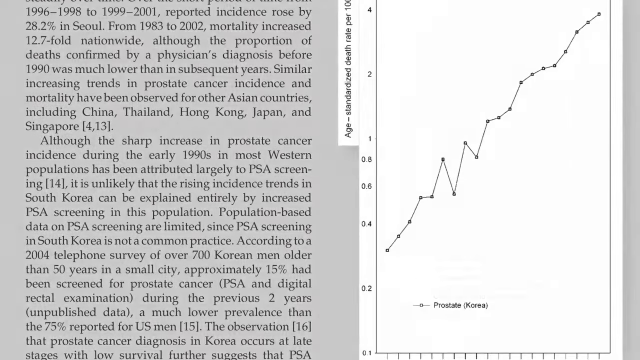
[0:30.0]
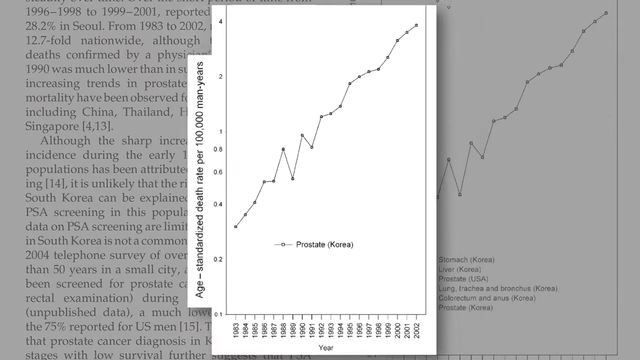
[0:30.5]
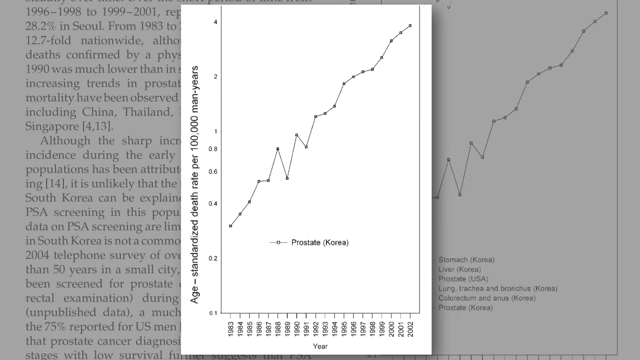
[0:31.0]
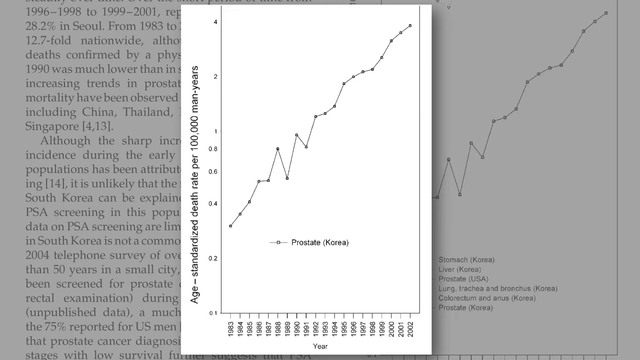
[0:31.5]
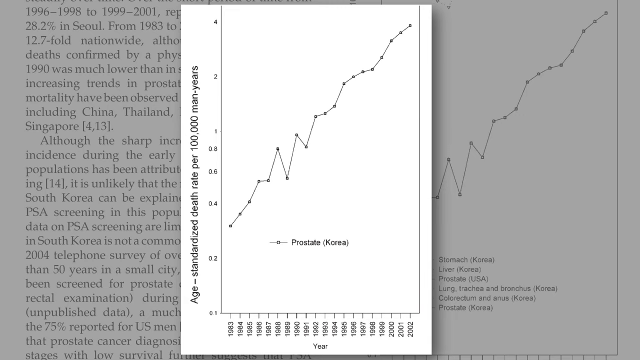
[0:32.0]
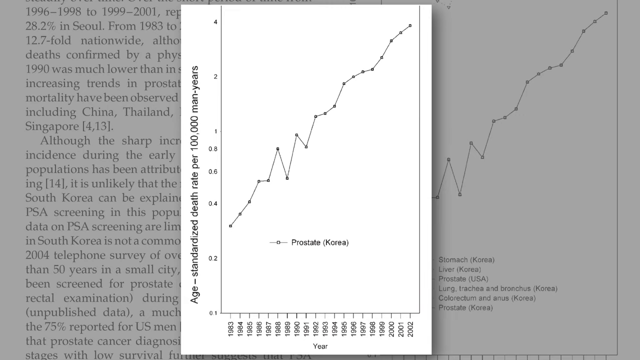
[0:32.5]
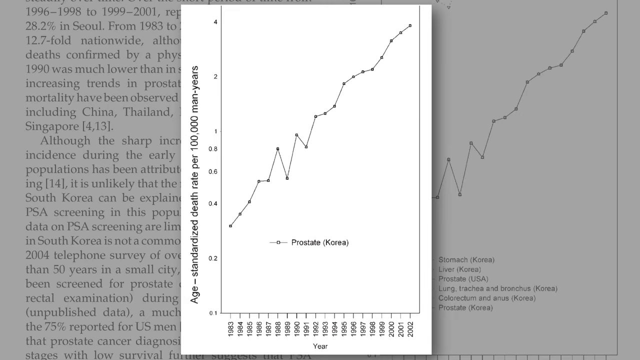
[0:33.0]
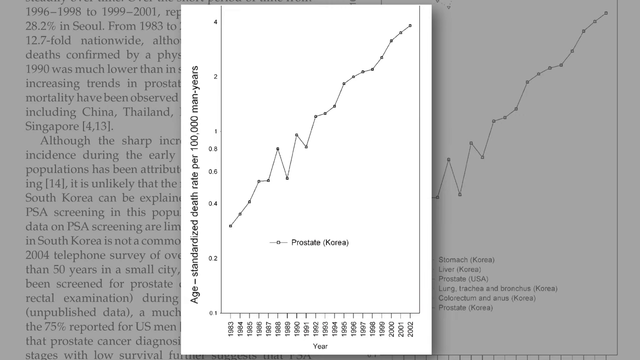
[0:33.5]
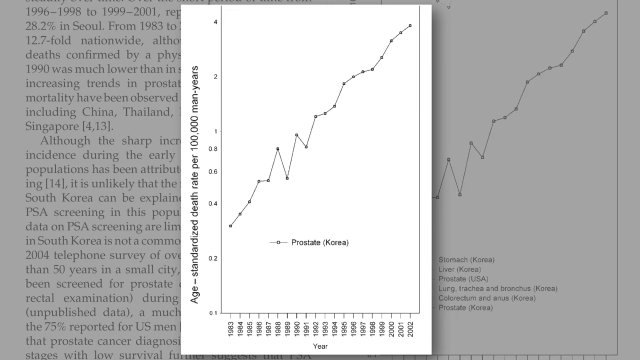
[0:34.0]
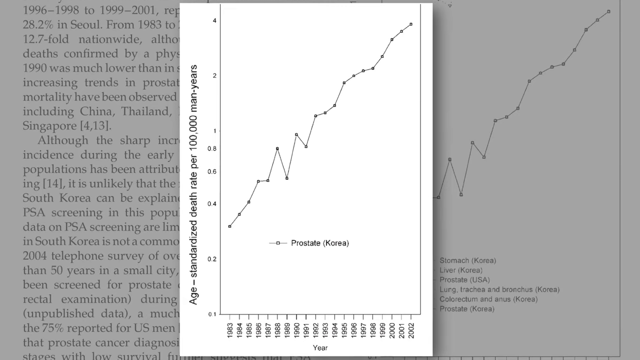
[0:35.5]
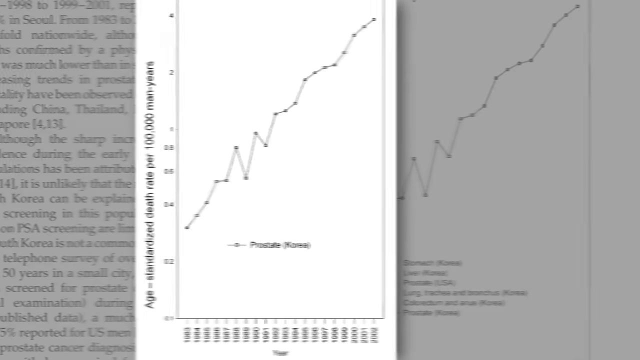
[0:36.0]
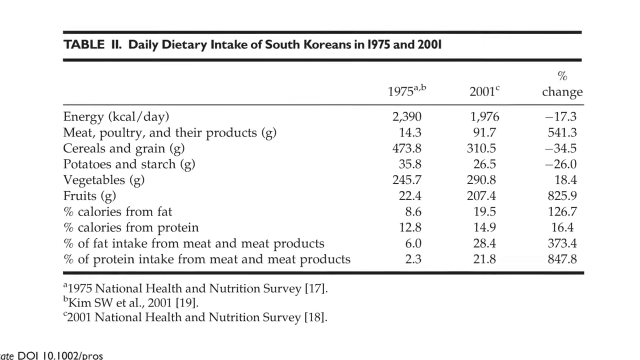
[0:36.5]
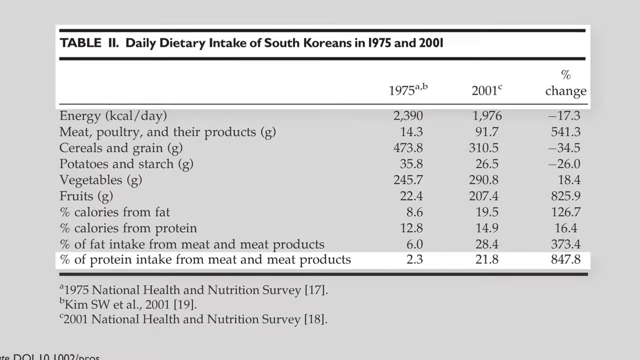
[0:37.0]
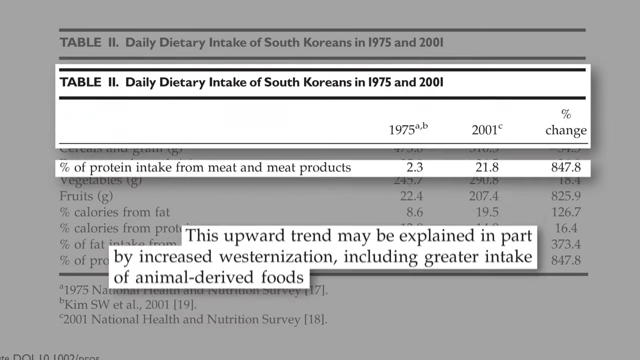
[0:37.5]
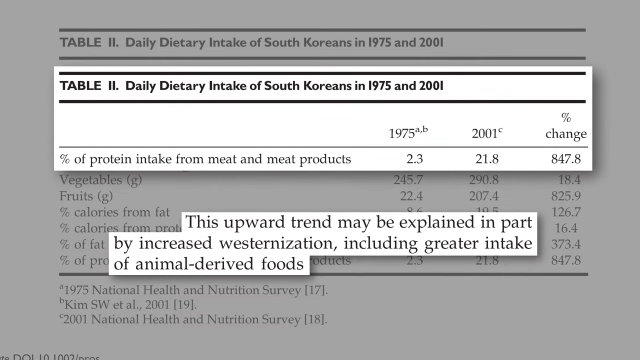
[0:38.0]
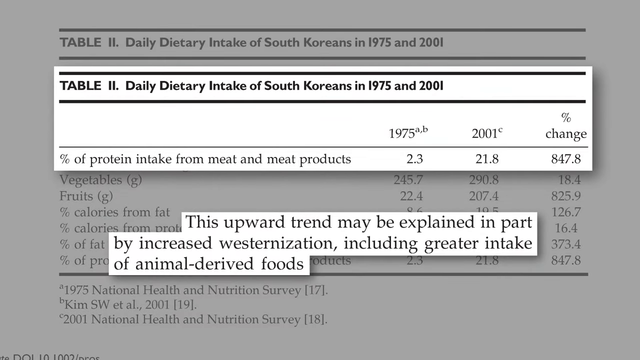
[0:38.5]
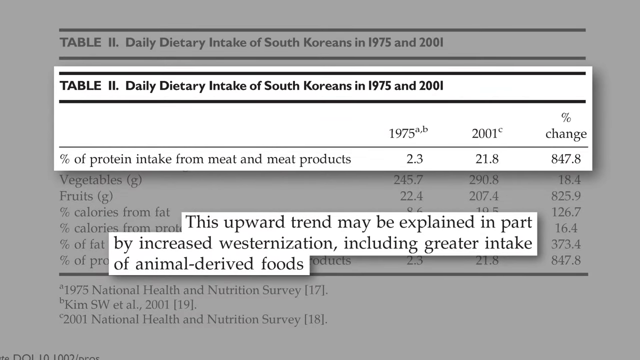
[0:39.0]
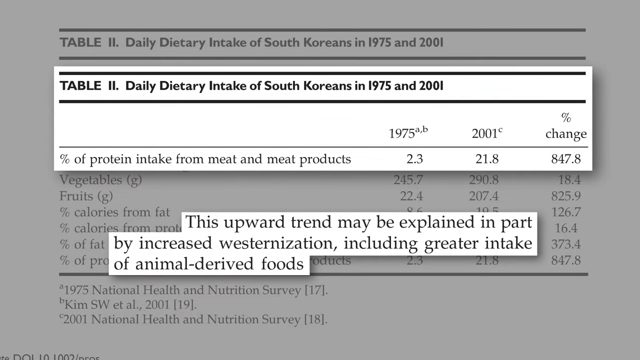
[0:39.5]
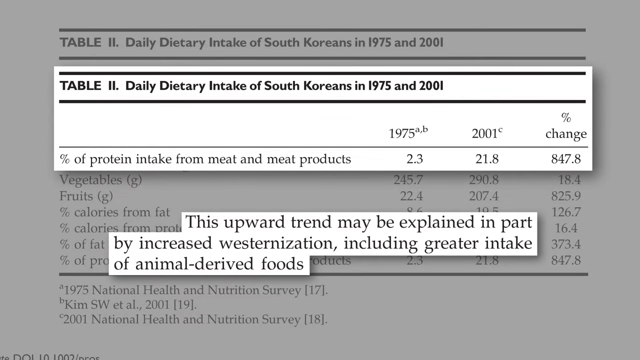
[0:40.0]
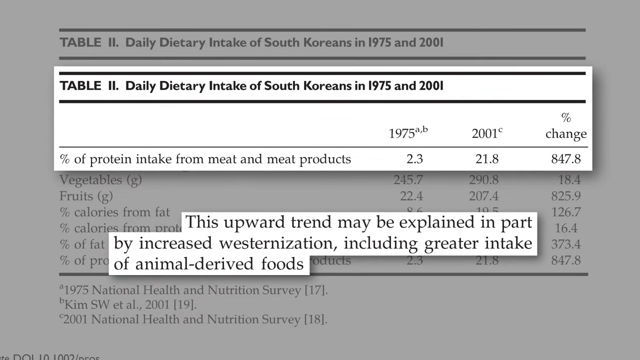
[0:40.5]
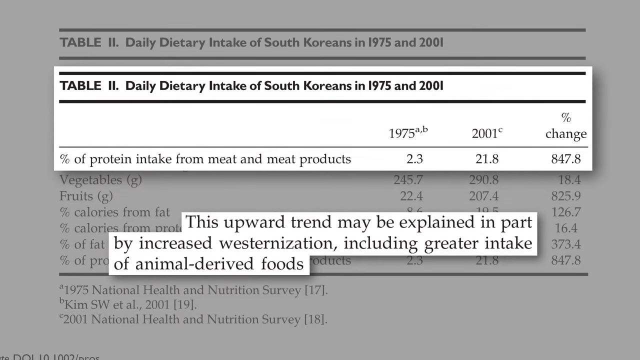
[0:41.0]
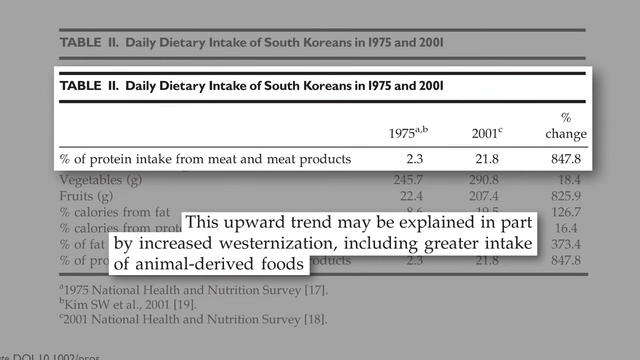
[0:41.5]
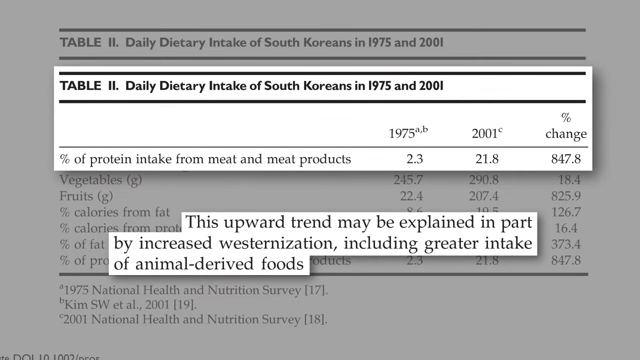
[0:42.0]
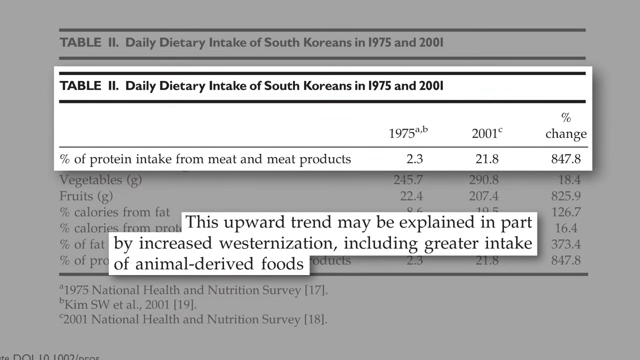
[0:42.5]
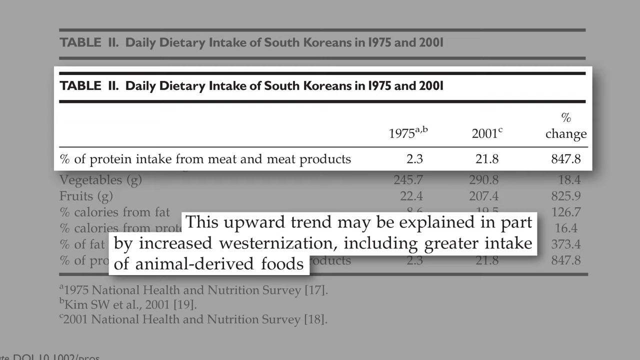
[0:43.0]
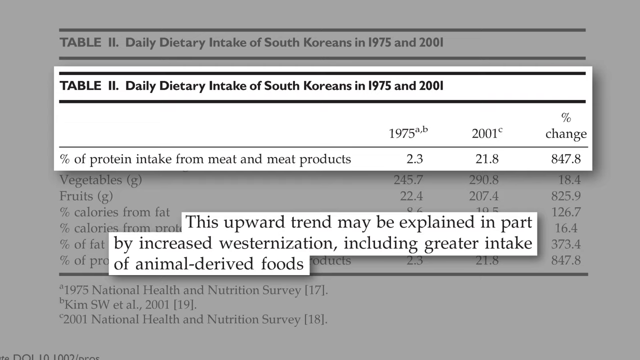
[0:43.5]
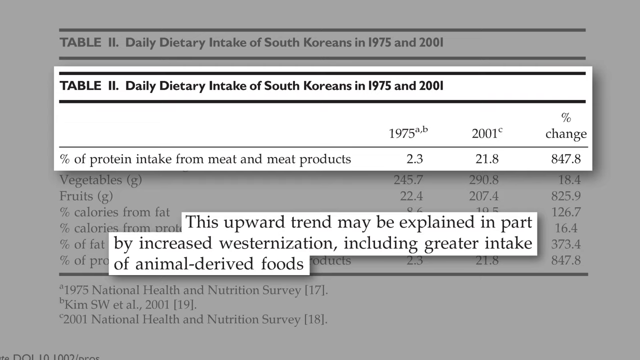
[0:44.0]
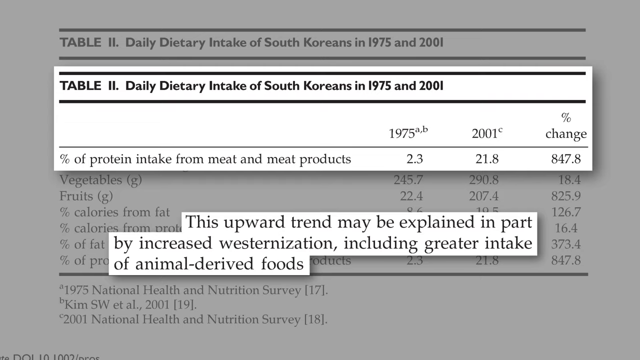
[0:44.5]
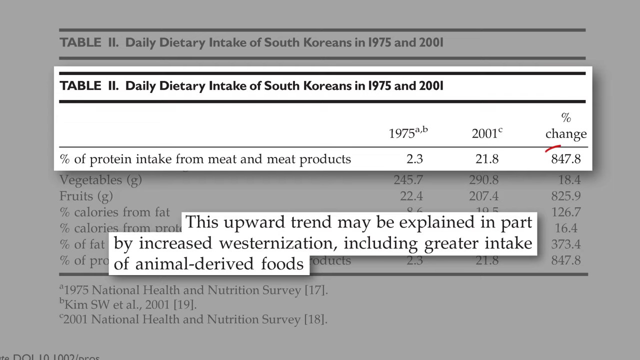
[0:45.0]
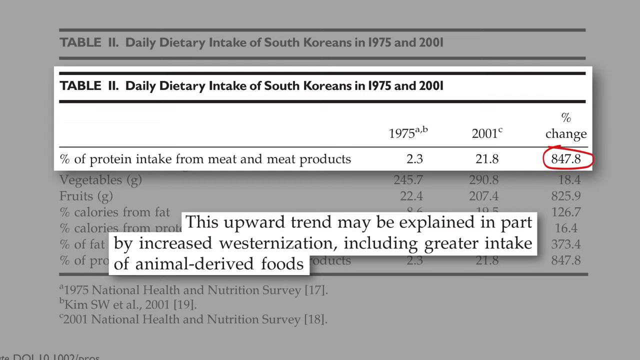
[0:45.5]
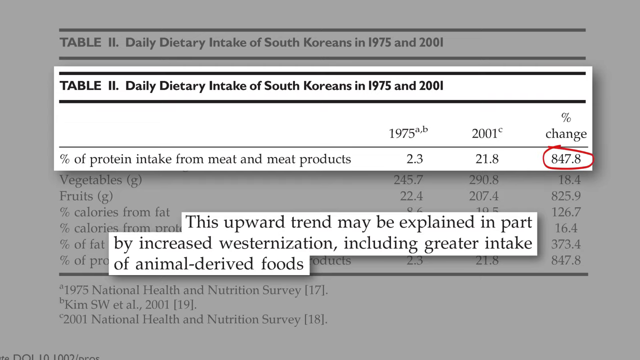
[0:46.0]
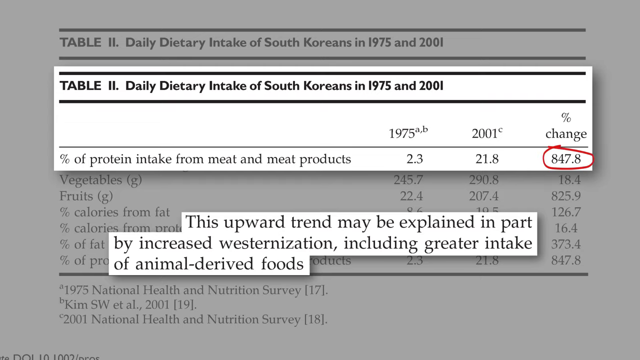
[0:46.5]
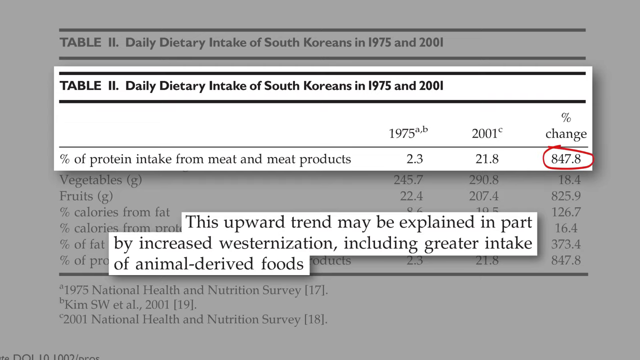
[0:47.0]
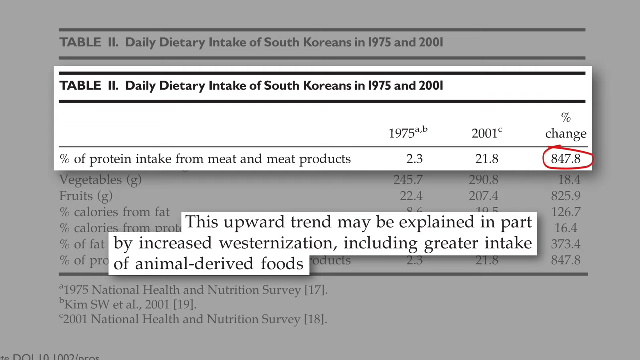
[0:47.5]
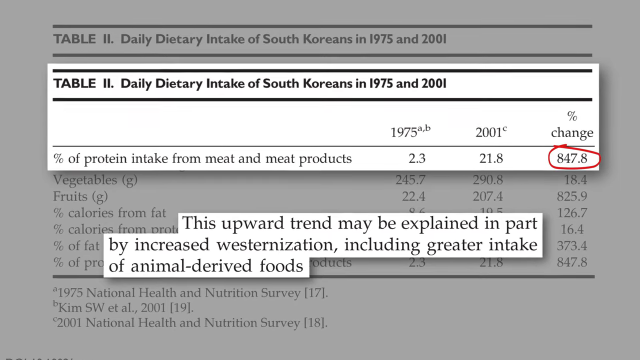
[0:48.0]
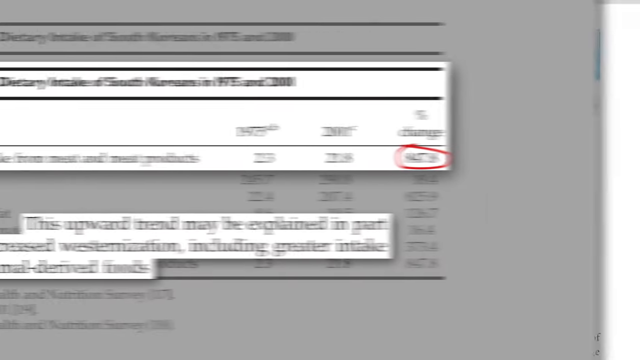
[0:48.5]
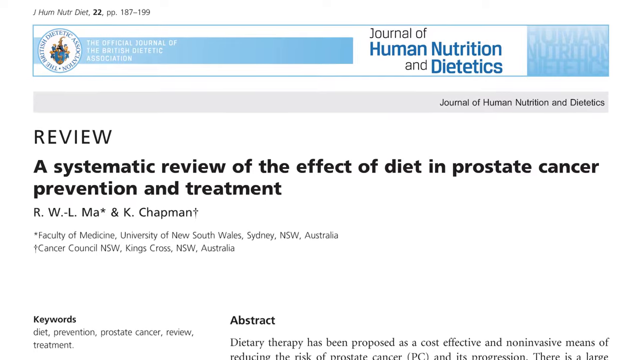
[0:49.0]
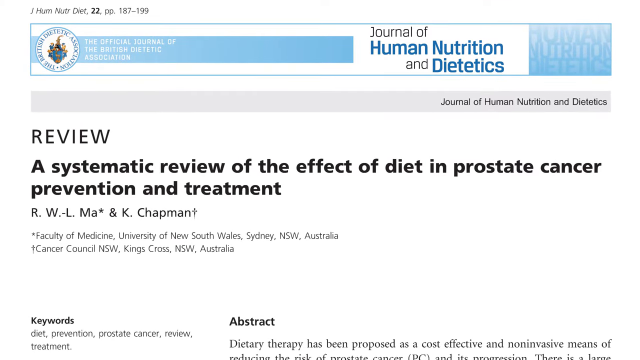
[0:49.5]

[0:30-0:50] A line chart about the rate of prostate cancer in South Korea rises progressively over time: it is low in 1993, at around 0.3, and goes up to about 4 by 2002. The x-axis shows the year and the y-axis shows age standard death per 100,000. The view changes to a table, "Daily dietary intake of South Koreans in 1975 and 2001". One highlighted row is the percent of protein intake from meat and meat products: 2.3 in 1975, 21.8 in 2001, and a change of 847%. A highlighted cutout text then pops up, reading "This upward trend may be explained in part by increased westernization including greater intake of animal-derived foods."